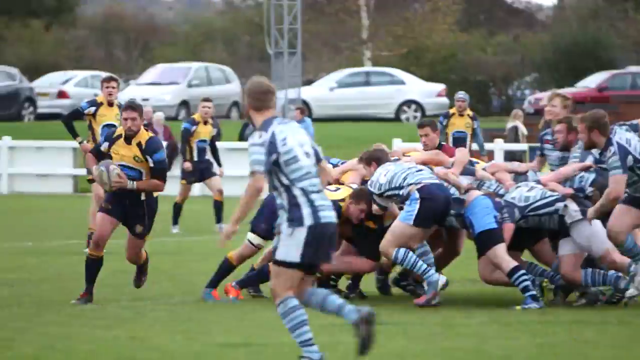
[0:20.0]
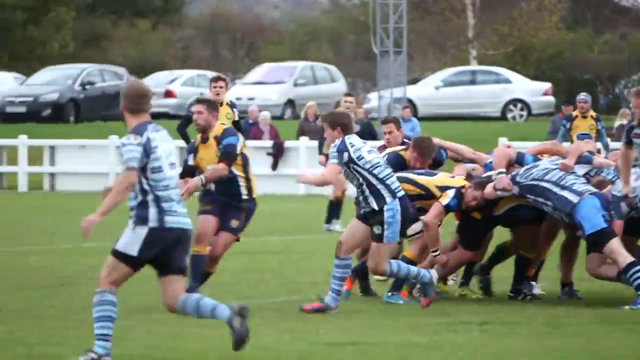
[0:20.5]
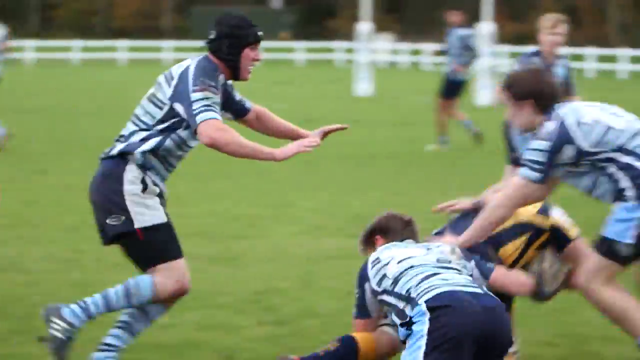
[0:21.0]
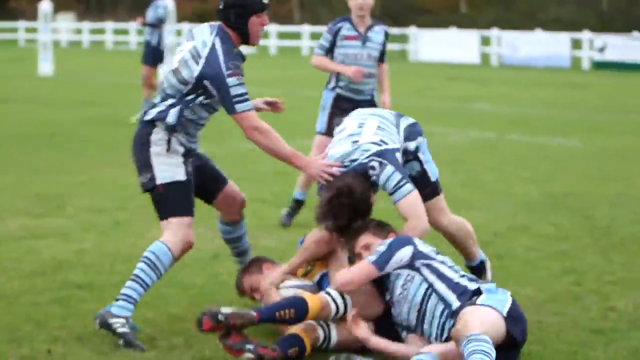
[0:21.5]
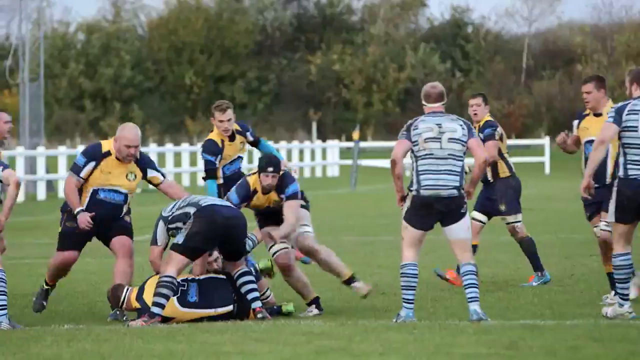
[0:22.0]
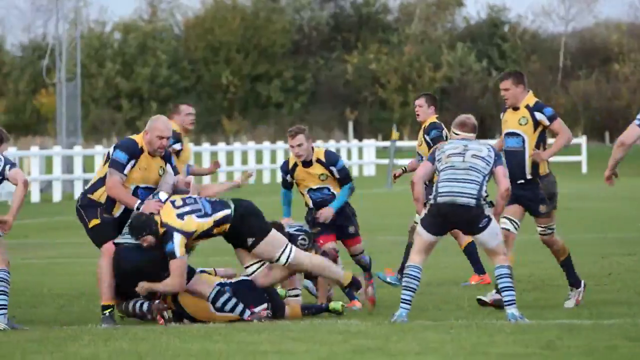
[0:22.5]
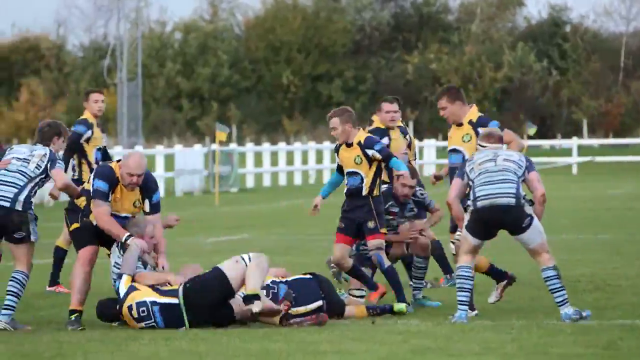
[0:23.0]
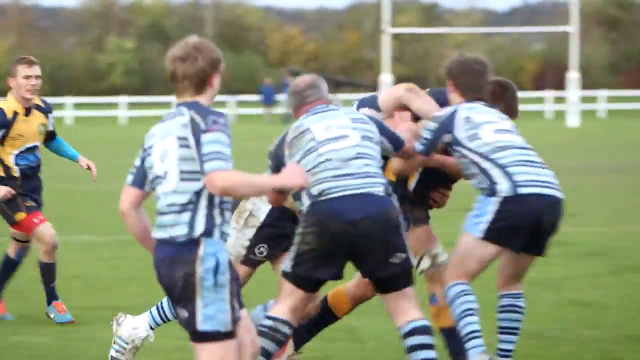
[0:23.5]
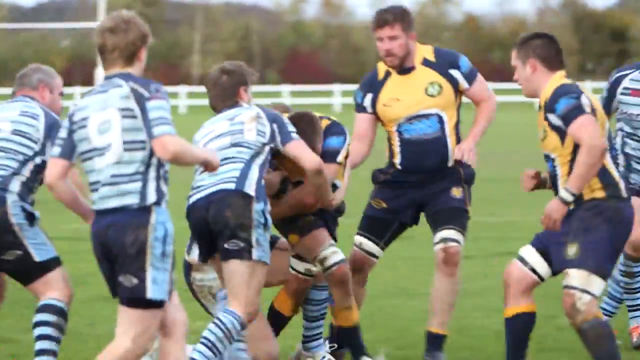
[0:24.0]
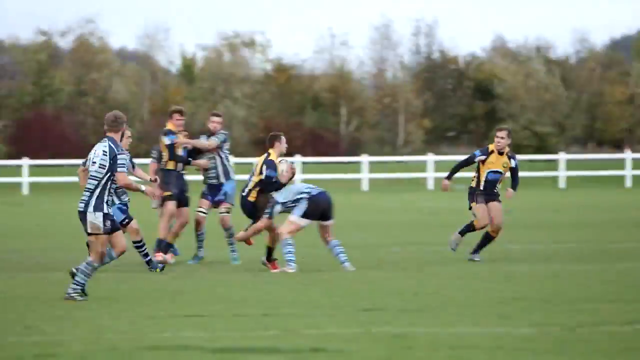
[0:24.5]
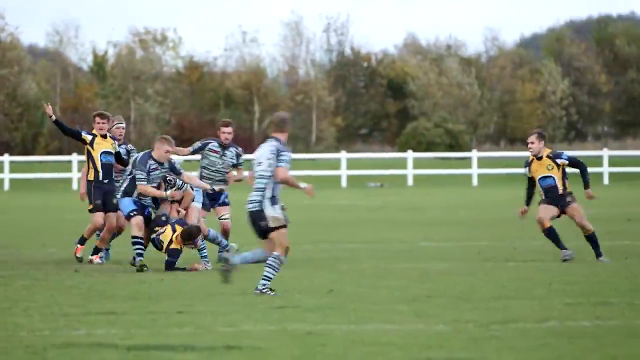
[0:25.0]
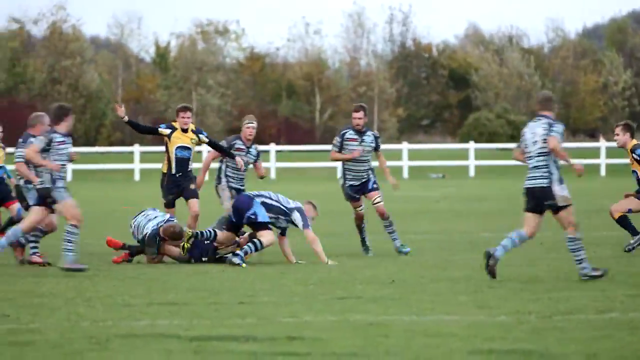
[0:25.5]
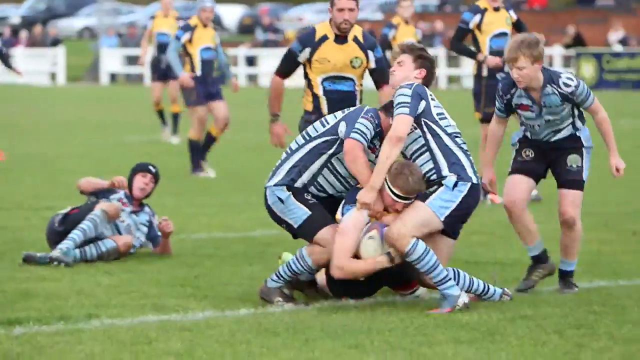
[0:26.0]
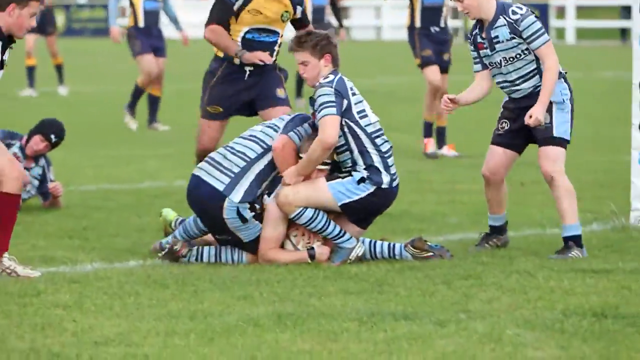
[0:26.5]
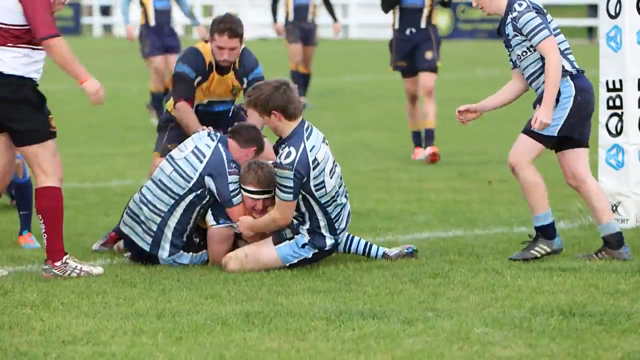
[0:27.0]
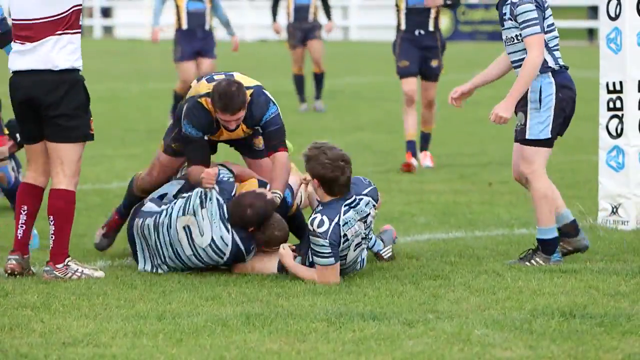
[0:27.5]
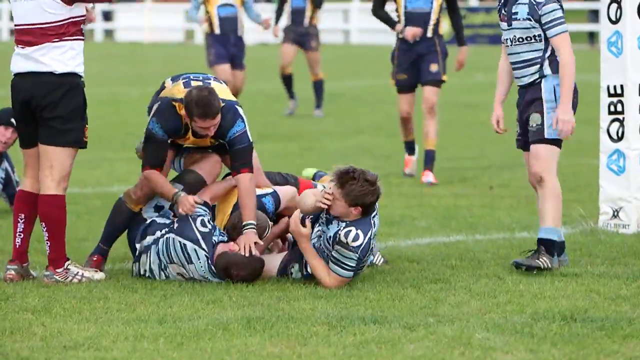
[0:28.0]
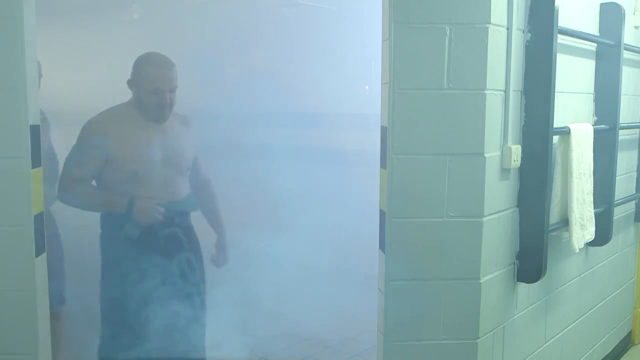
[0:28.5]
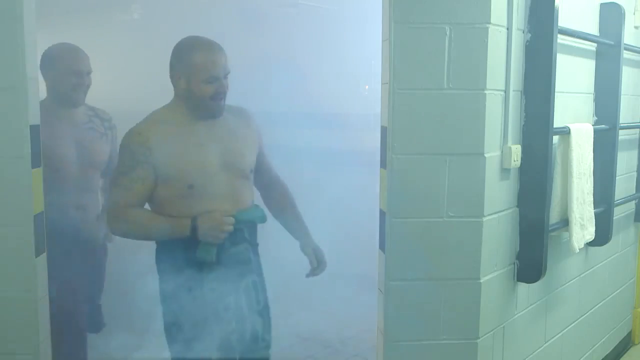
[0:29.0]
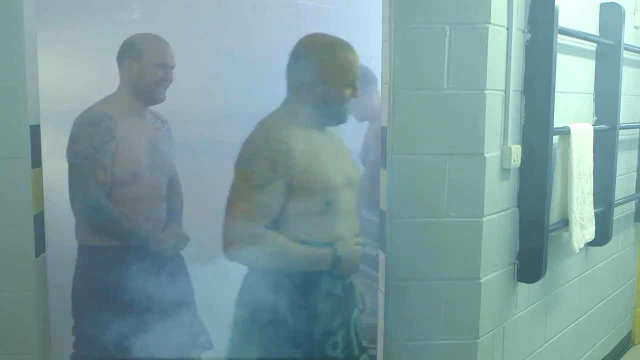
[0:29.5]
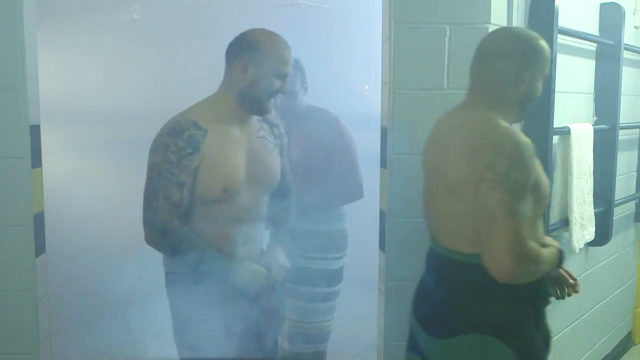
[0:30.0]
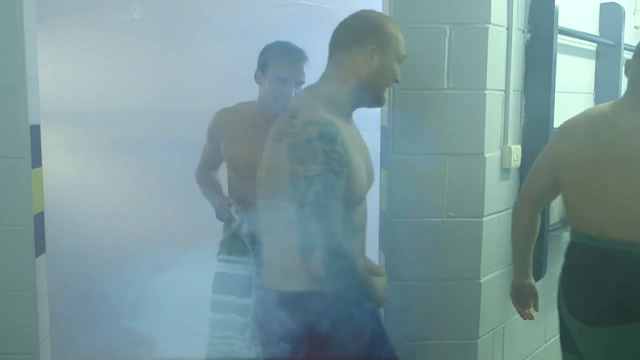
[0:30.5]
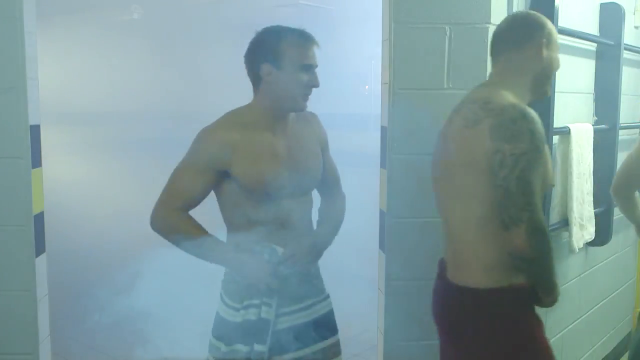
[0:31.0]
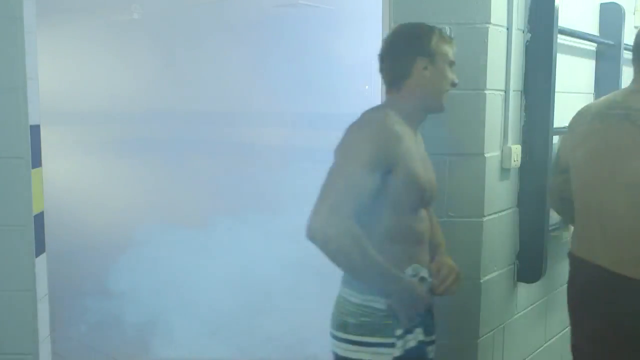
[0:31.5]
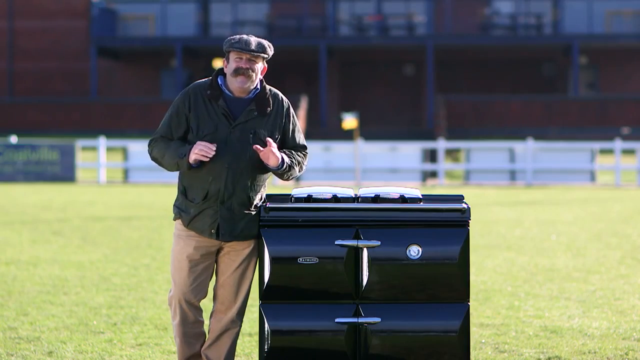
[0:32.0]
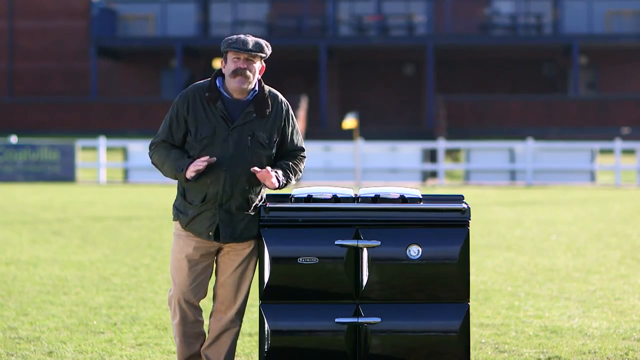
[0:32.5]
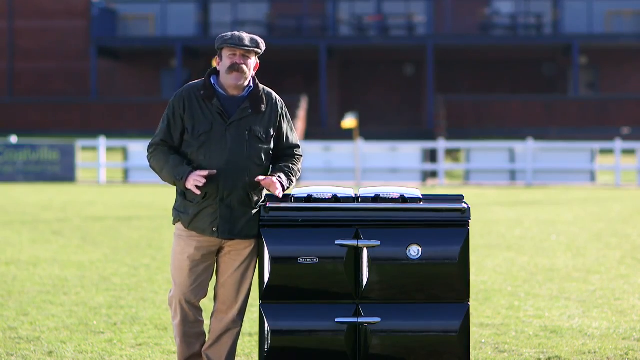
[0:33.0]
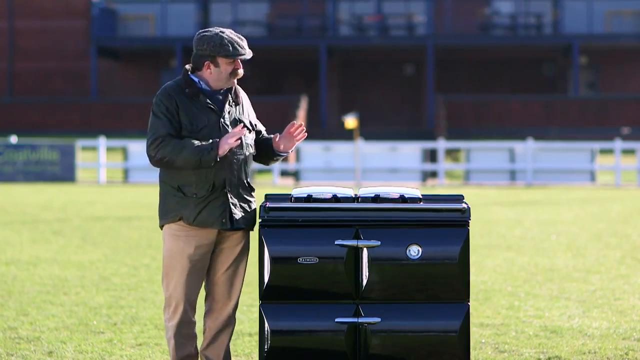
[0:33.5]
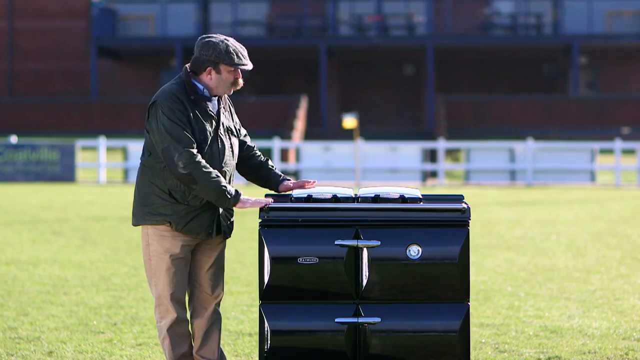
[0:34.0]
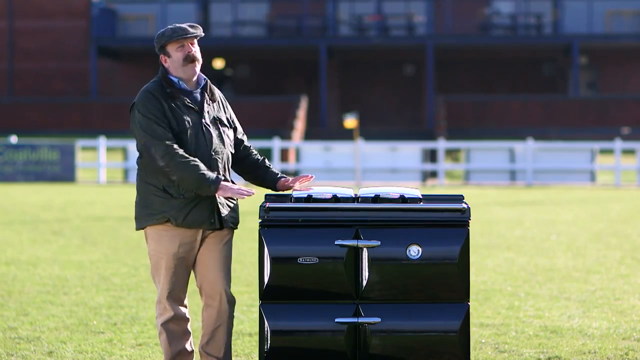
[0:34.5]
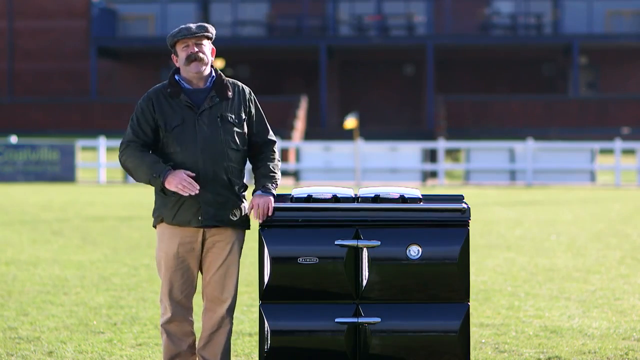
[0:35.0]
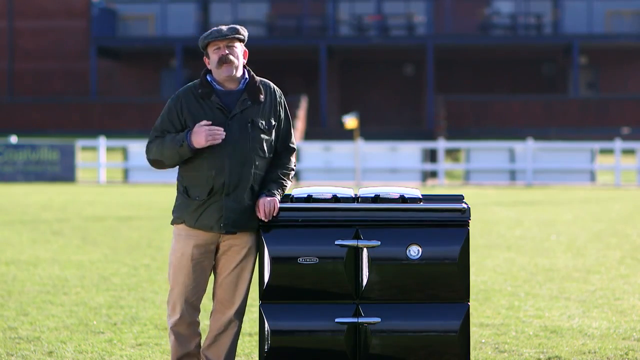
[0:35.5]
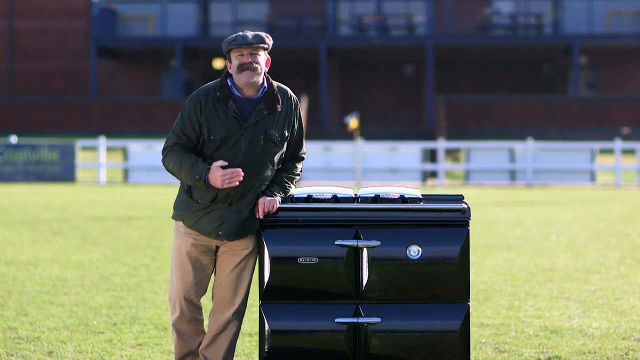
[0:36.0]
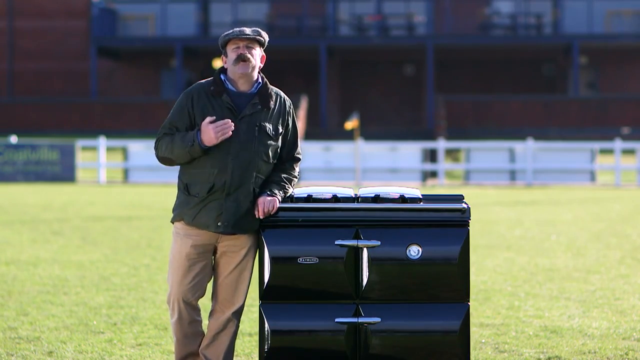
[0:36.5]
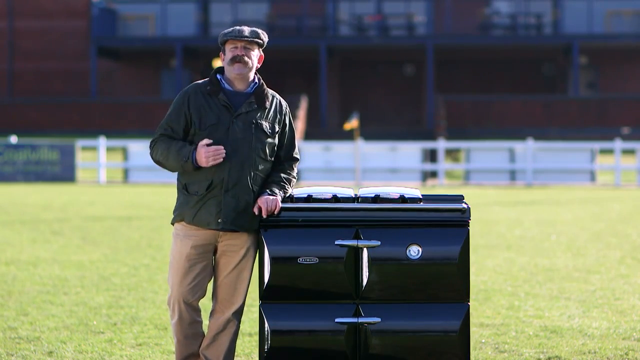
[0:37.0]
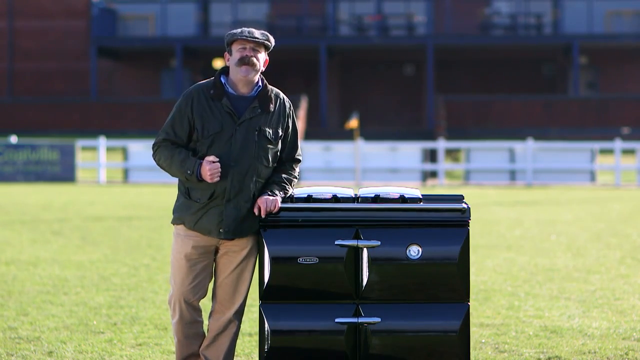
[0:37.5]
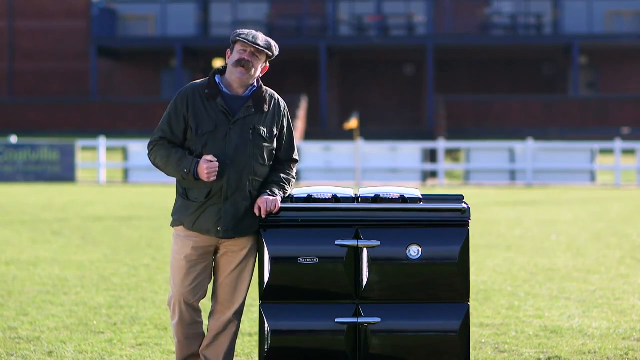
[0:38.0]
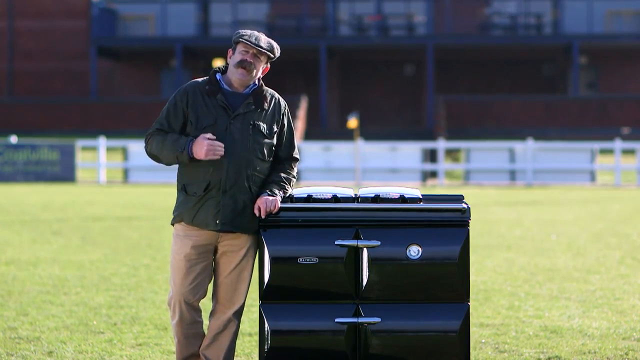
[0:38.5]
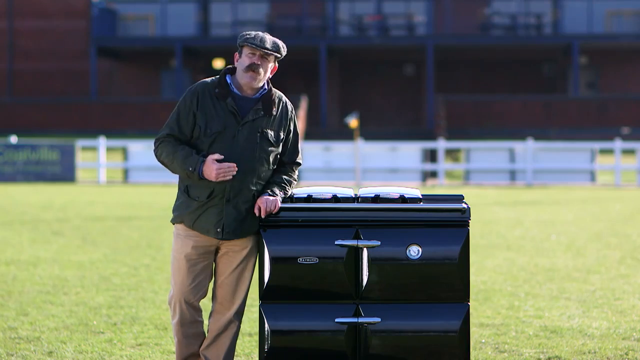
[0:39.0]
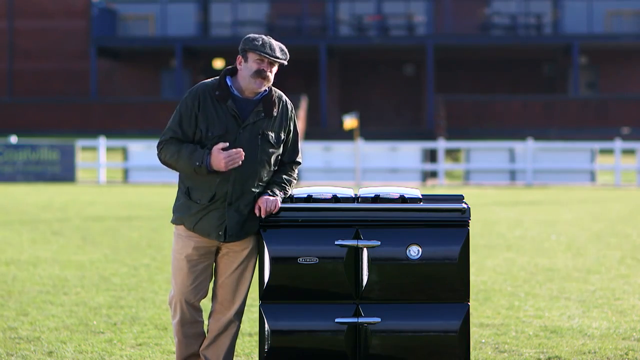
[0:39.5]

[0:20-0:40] A rugby player runs almost toward the camera with a rugby ball in his hands, looking like he is about to pass it to the left. The video cuts to a different angle, where several players in what look like blue and white jerseys tackle a player in yellow and blue; he is on the ground with the ball in his hands as several players tackle him. Different angles and scenarios follow, showing rugby players tackling each other from different vantage points for several seconds. Toward the end it looks like one player may have scored, though it is unclear; he is taken down to the ground, holding the ball as two other players tackle him. The scene then moves inside to what appears to be the showers, which are very steamy, and rugby players wearing only towels walk past the camera. Back outside, the same man in the cap talks to the camera while standing next to a dark metal machine, kind of waist high, that looks like it could be a grill.